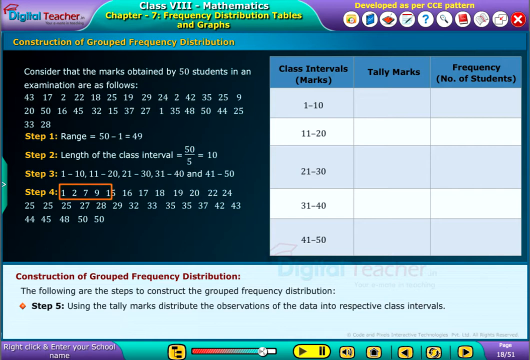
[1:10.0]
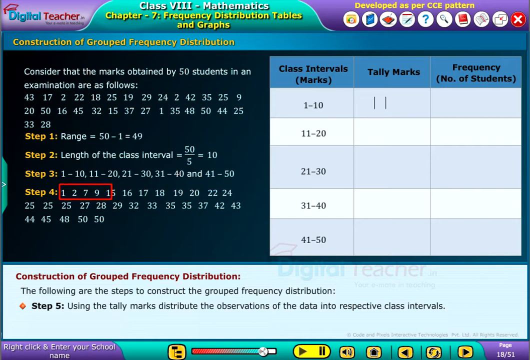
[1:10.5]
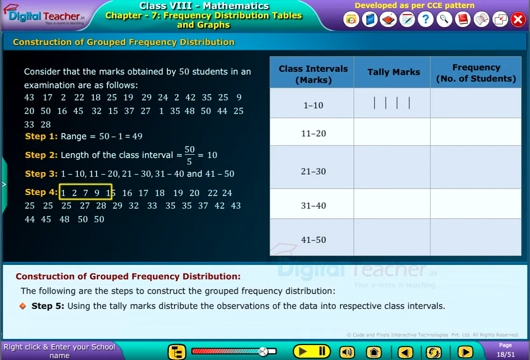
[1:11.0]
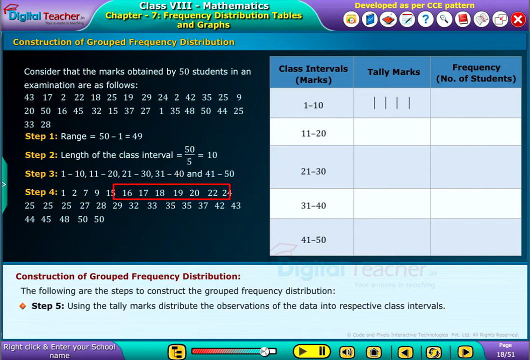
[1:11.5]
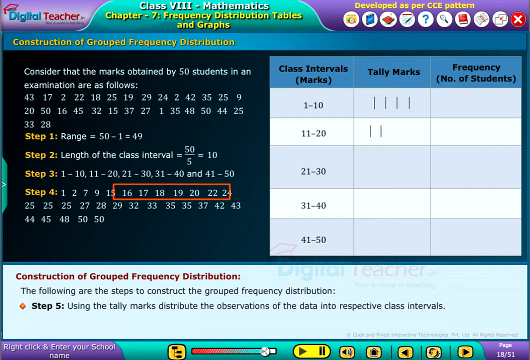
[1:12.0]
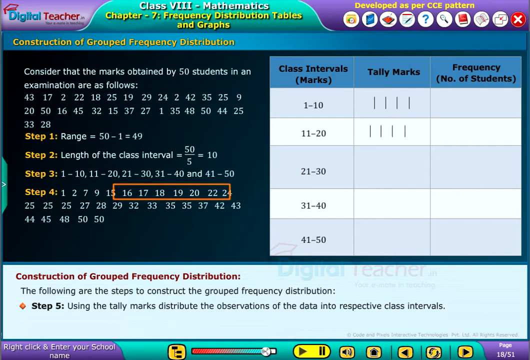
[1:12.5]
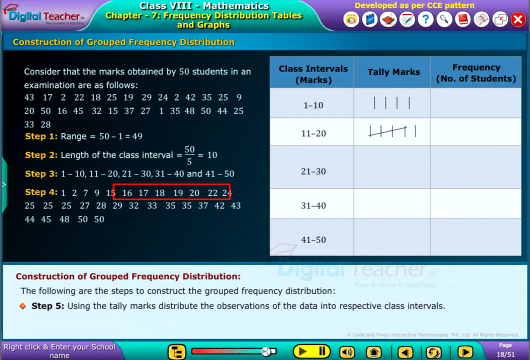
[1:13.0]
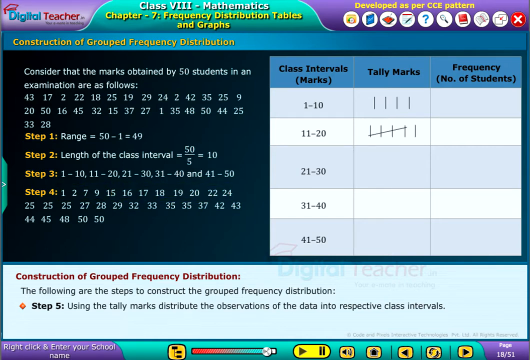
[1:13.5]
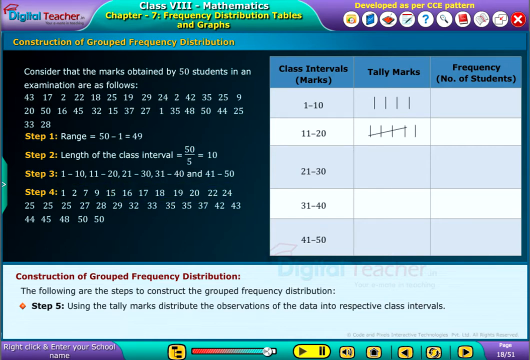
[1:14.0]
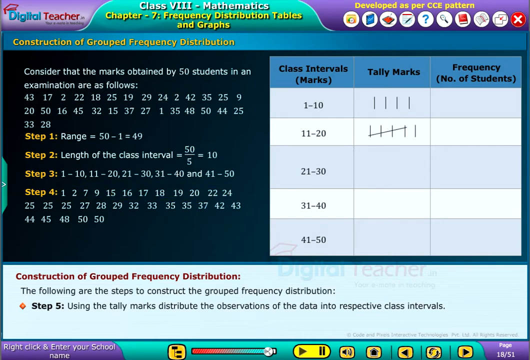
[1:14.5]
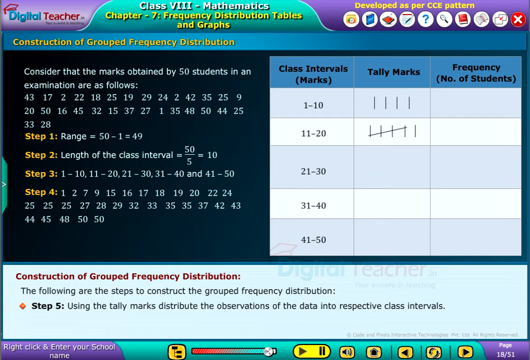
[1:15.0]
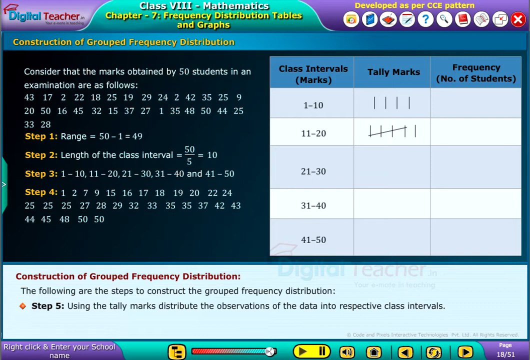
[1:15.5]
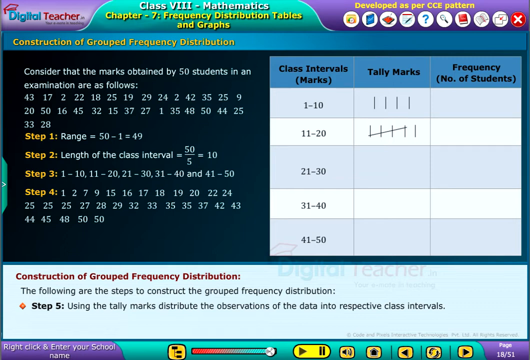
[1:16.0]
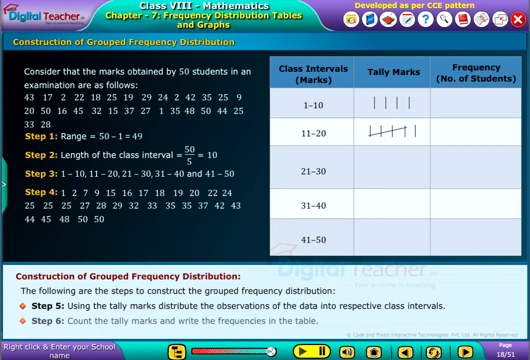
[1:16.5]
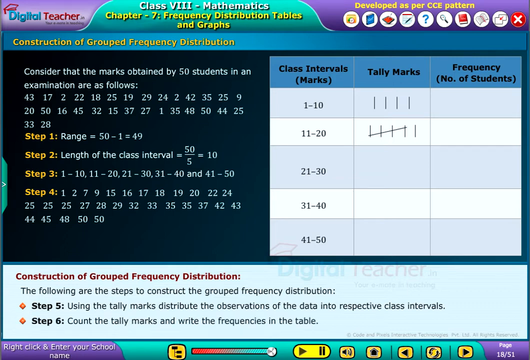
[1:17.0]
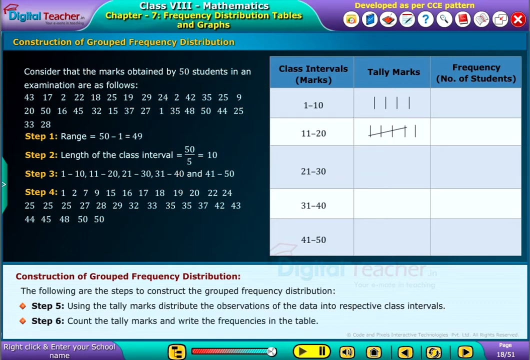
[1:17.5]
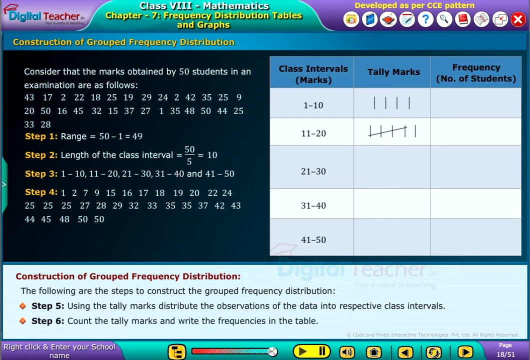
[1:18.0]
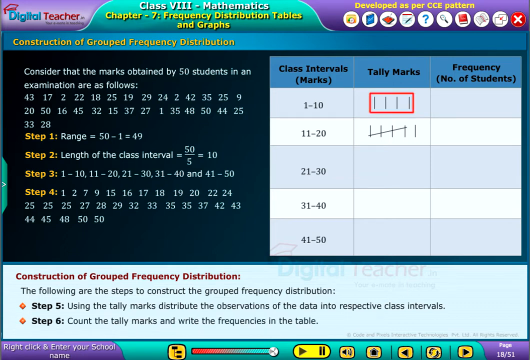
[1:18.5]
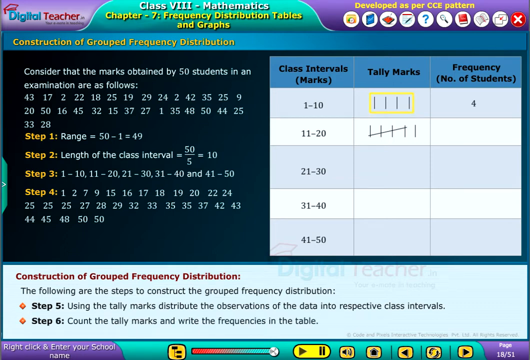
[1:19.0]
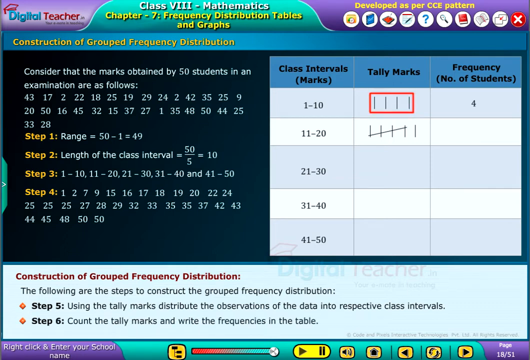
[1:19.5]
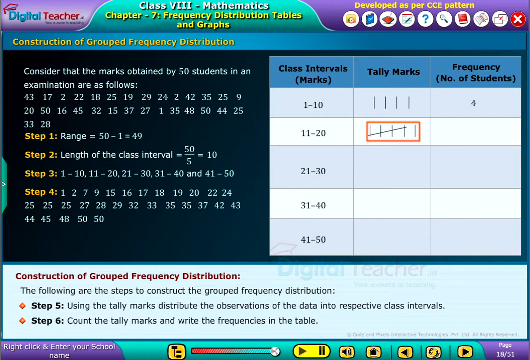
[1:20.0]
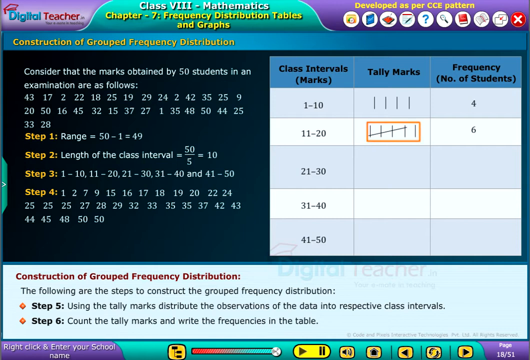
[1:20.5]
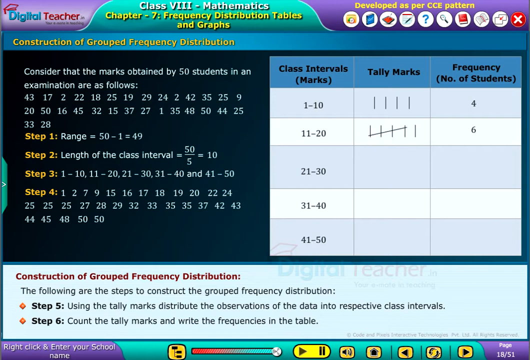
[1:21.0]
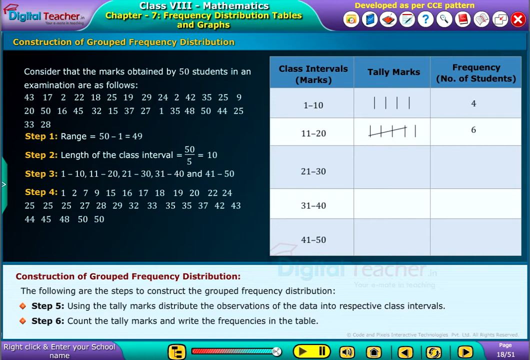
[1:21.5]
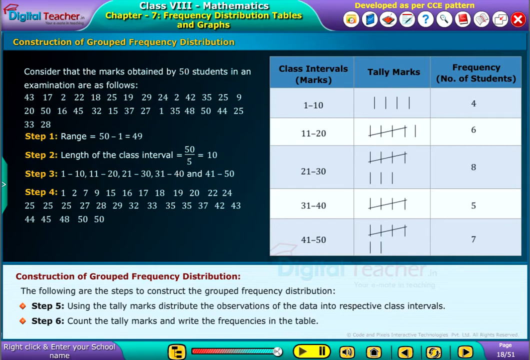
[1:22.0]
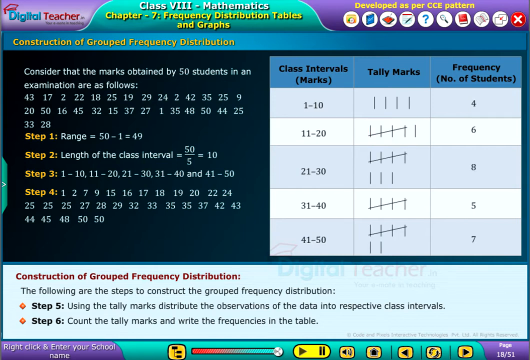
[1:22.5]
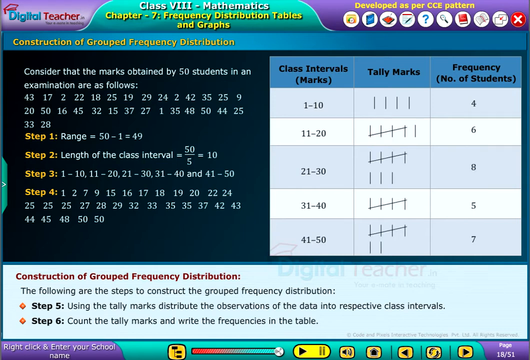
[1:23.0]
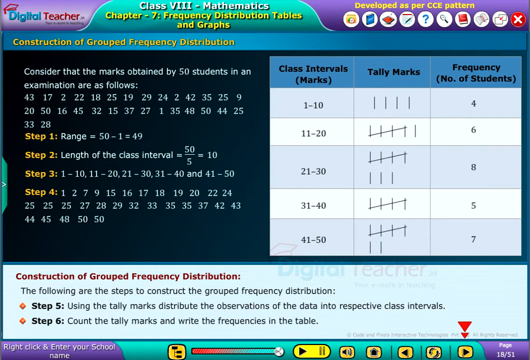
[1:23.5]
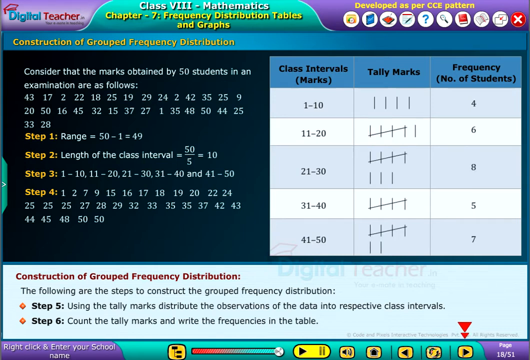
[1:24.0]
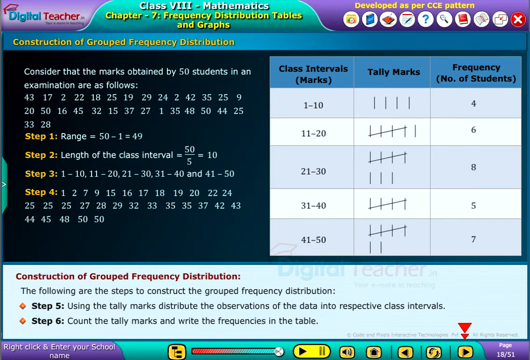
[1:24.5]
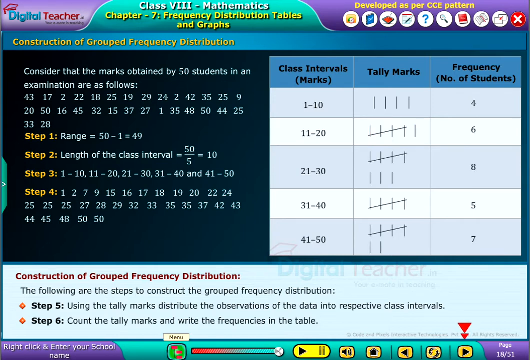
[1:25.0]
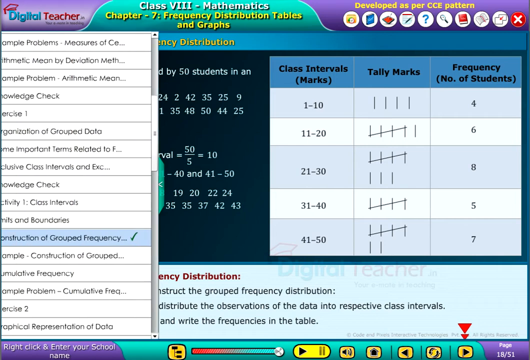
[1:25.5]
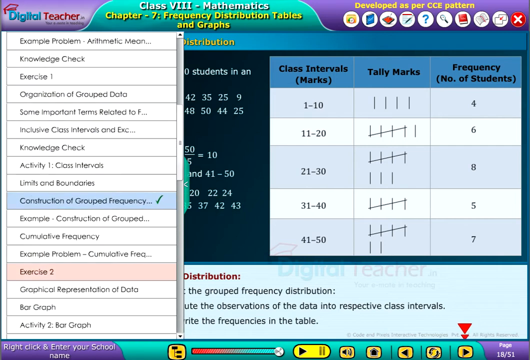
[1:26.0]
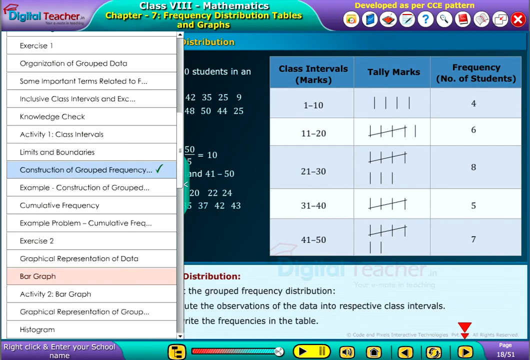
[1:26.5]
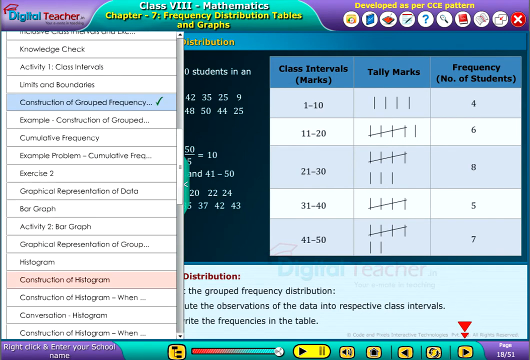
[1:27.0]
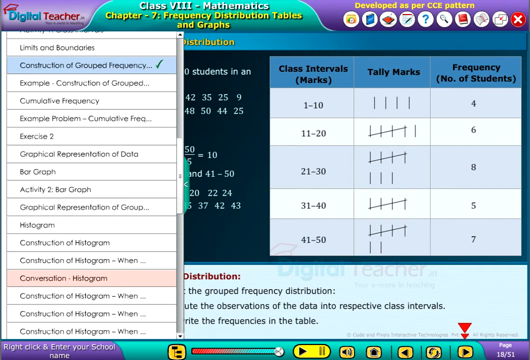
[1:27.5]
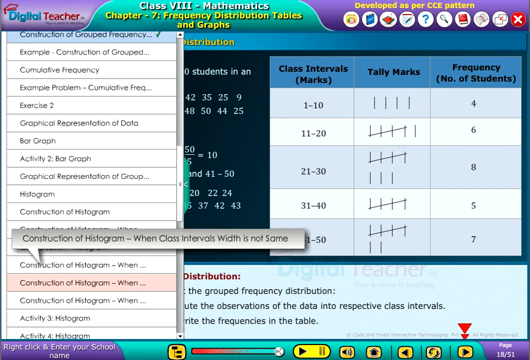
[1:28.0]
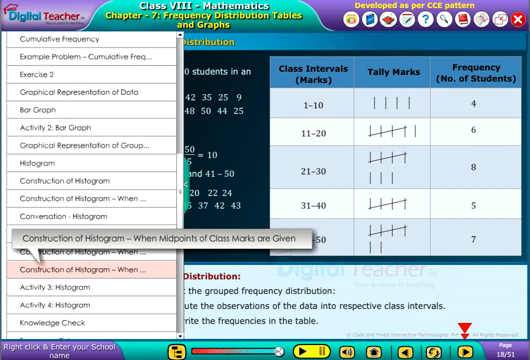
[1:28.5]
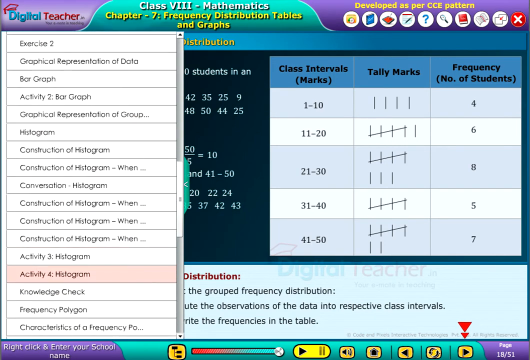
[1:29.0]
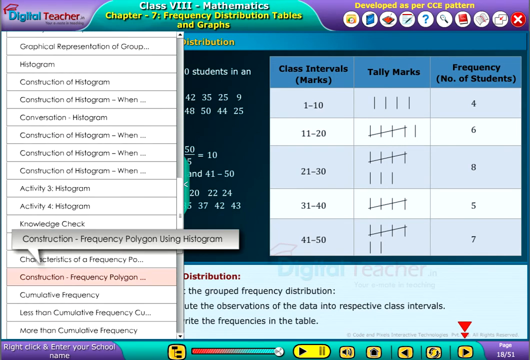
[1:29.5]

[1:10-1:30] A slide for a math class shows "digital teacher" written in the top left-hand corner. Next to it, in the center against a teal, folder-tab-style background, is "class VIII mathematics" in white, then "chapter seven, frequency distribution, tables and graphs" in yellow. To the right are a number of small circular icons that look like they can be clicked for more information. The slide is divided into two halves. On the left-hand side is some text and a string of numbers, and underneath it steps one, two, three and four are shown. Step four shows another string of numbers and a rectangular box highlighting the grouping of numbers. The bottom quarter of the slide holds a separate piece of information titled "construction of grouped frequency distribution"; it has a different, almost light whitish-teal background, while the other areas have a dark teal background. A table with three columns is on the slide. The first column reads "class intervals" and lists 1 to 10, 11 to 20, 21 to 30, 31 to 40 and 41 to 50. The second column reads "tally marks", and the third column reads "frequency", the number of students. Tally marks are made for each grouping and then the total number is written; for example, for 1 to 10 there are four tally marks and the number 4 is written for the number of students. This continues for each class interval. Next, the sidebar pops up with all the contents of the chapter, quickly scrolling down over each item, with the selected part highlighted in a pinkish hue.